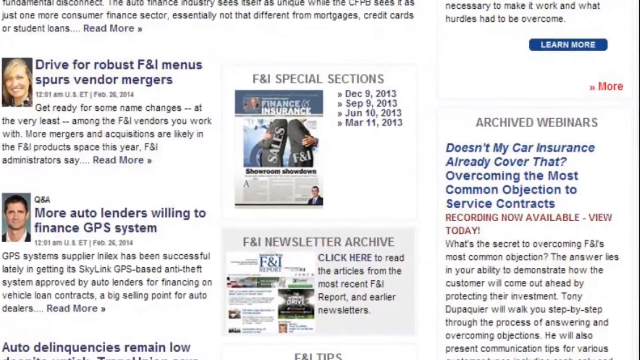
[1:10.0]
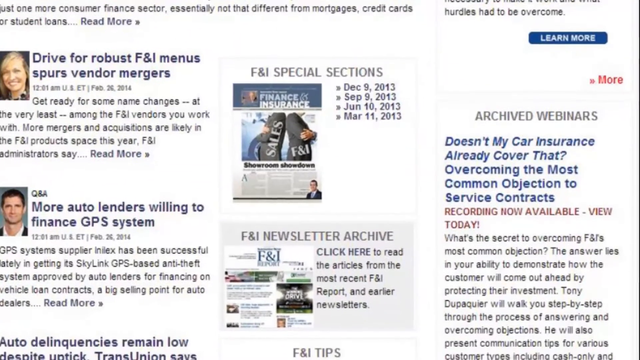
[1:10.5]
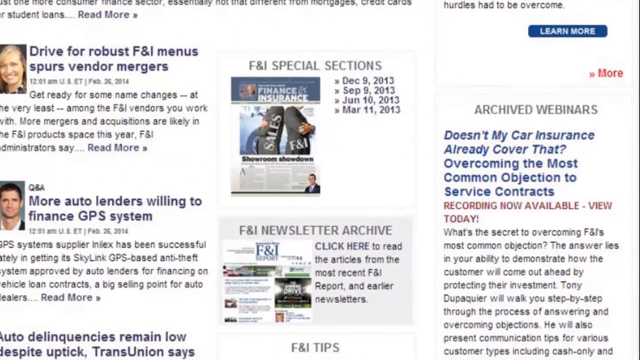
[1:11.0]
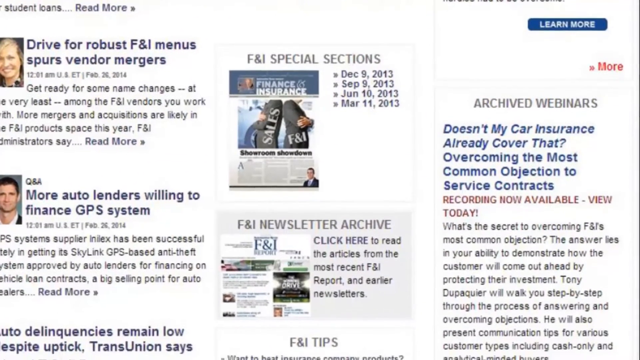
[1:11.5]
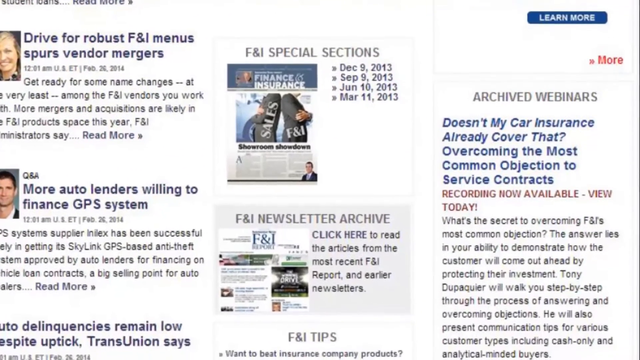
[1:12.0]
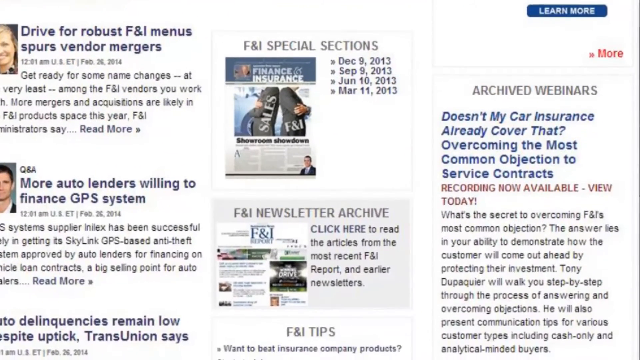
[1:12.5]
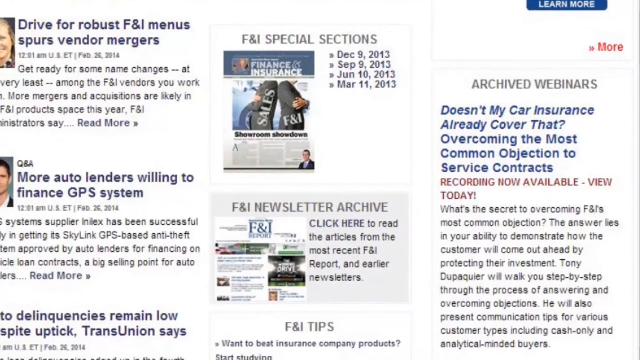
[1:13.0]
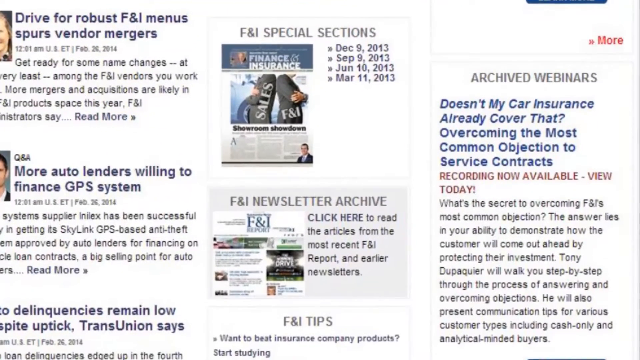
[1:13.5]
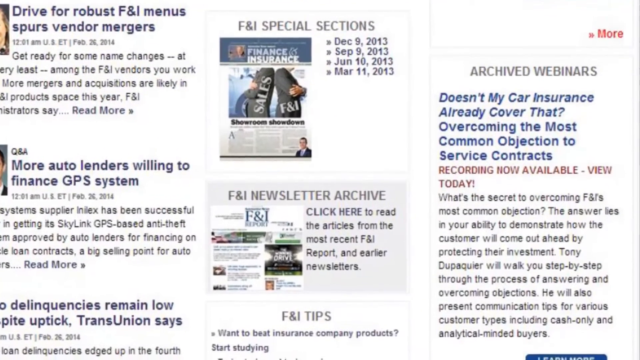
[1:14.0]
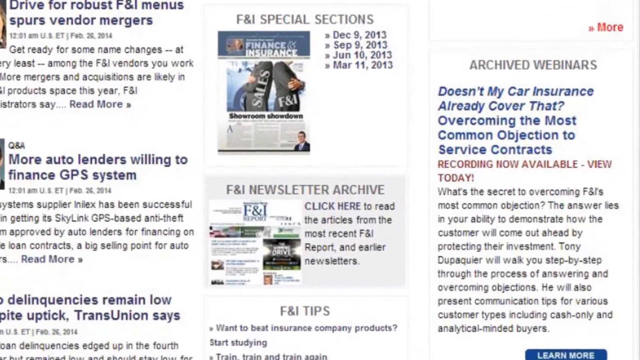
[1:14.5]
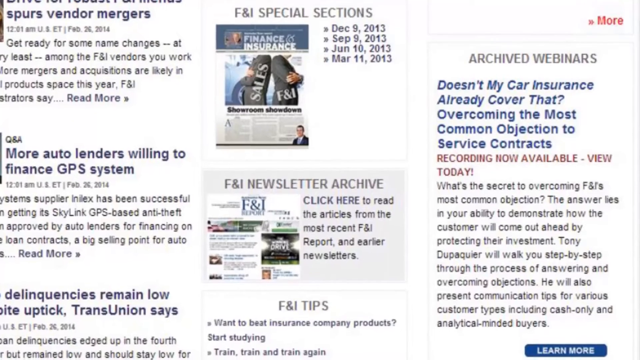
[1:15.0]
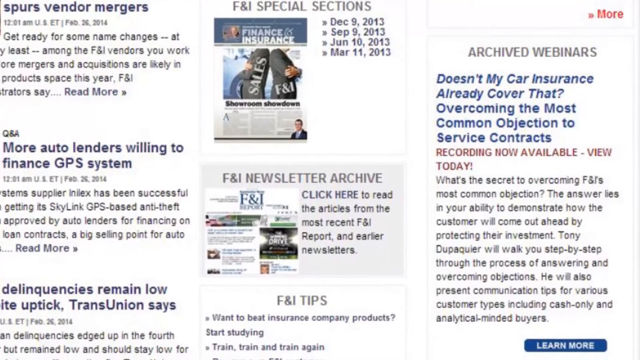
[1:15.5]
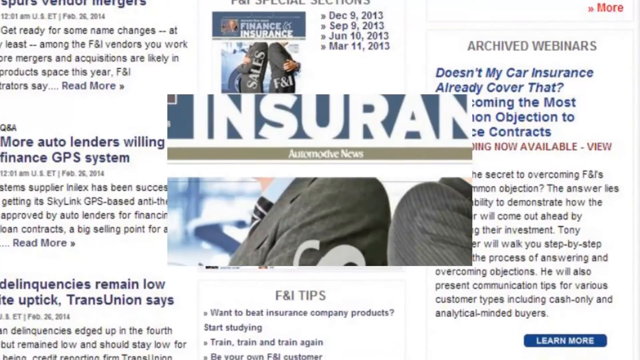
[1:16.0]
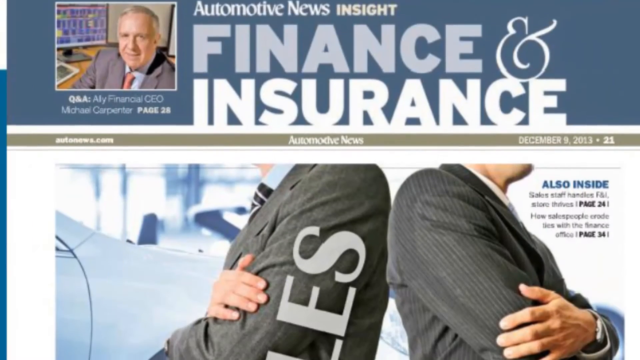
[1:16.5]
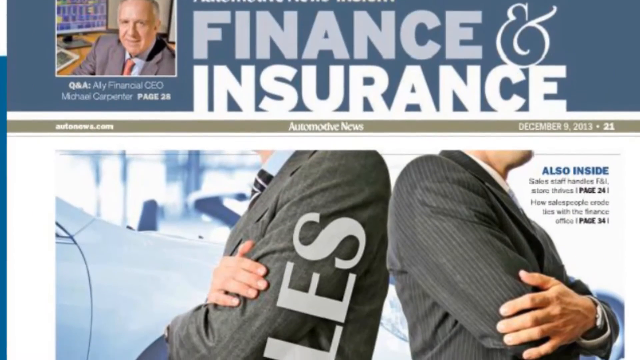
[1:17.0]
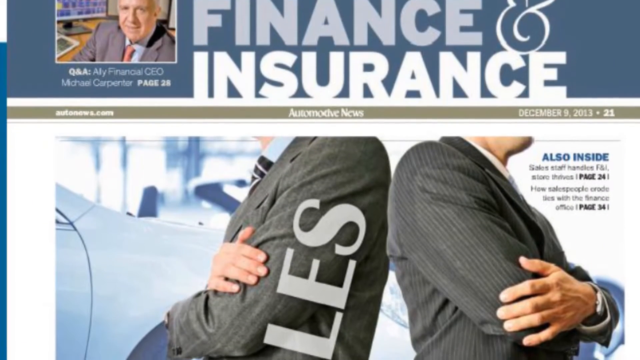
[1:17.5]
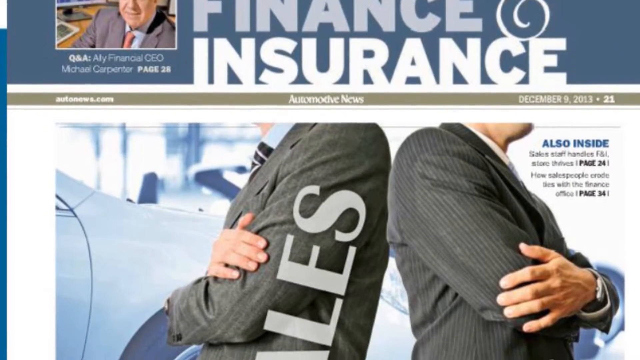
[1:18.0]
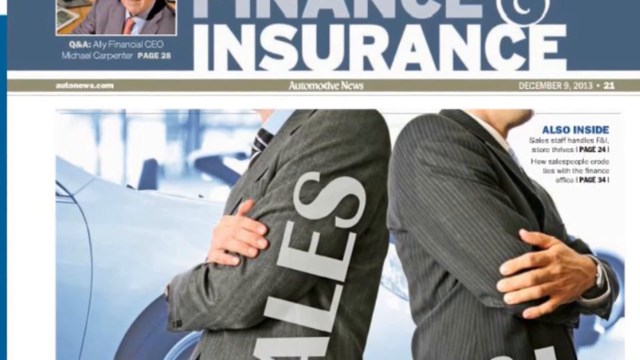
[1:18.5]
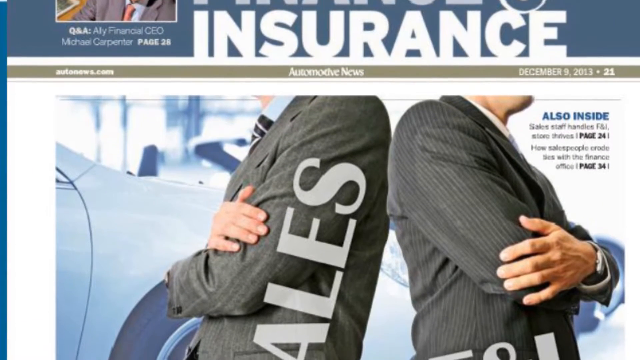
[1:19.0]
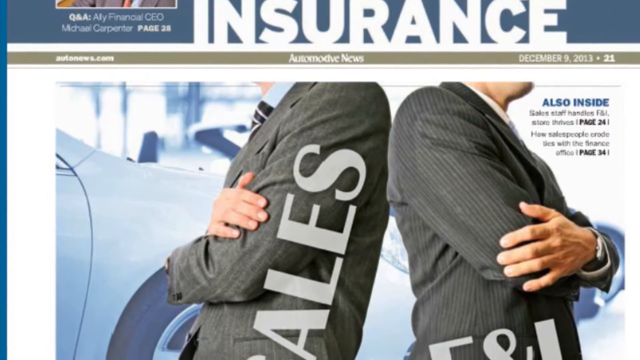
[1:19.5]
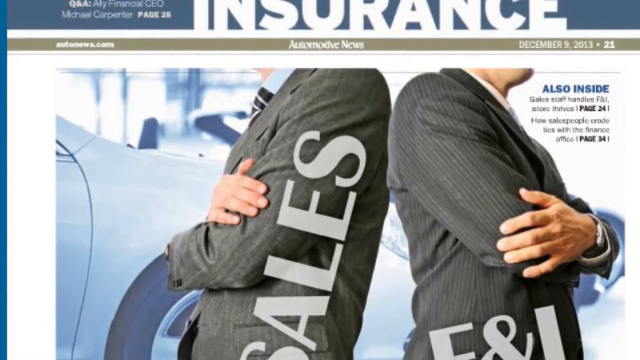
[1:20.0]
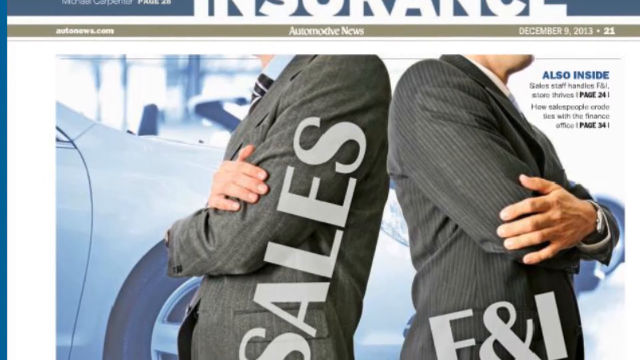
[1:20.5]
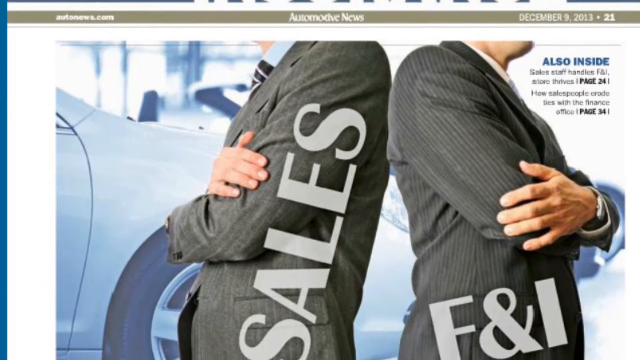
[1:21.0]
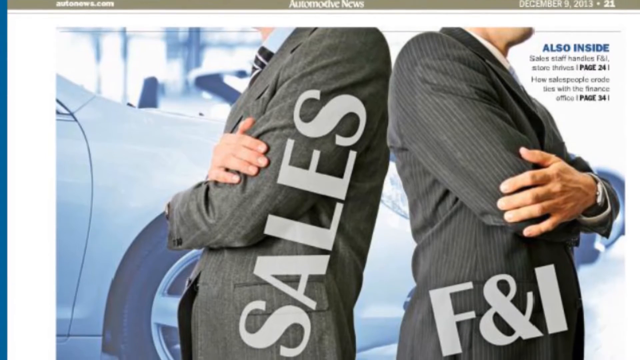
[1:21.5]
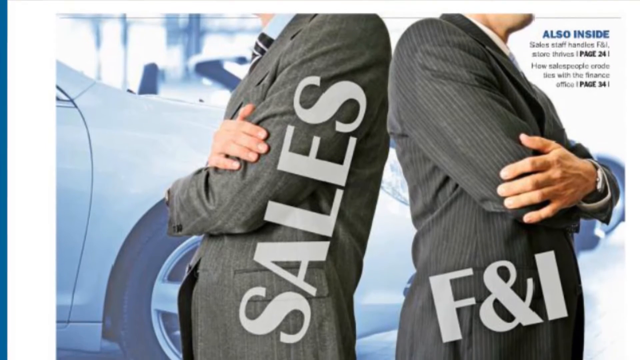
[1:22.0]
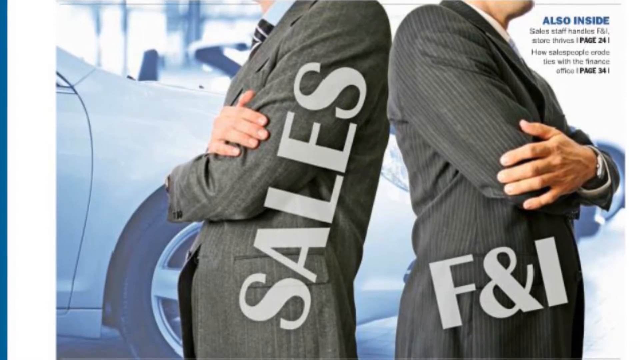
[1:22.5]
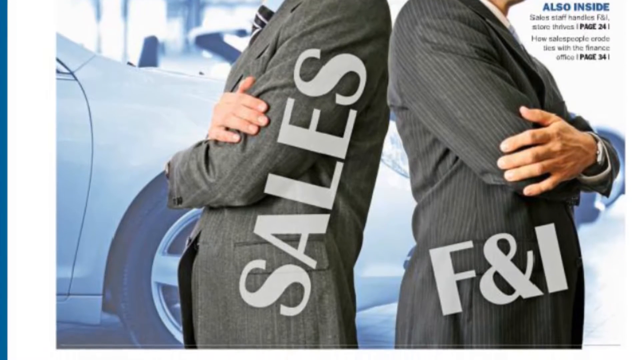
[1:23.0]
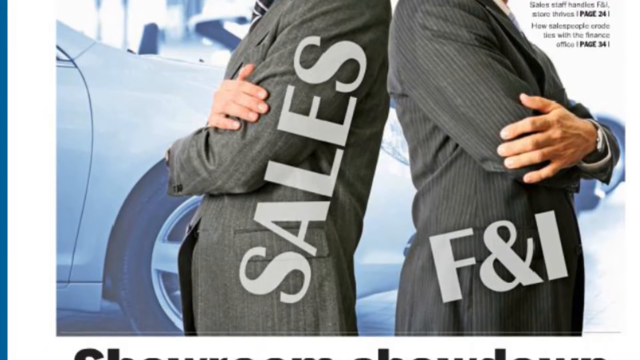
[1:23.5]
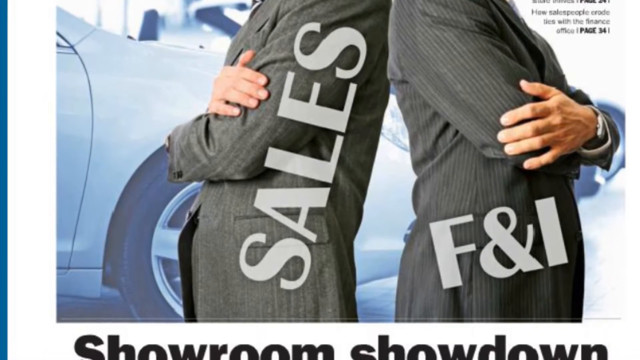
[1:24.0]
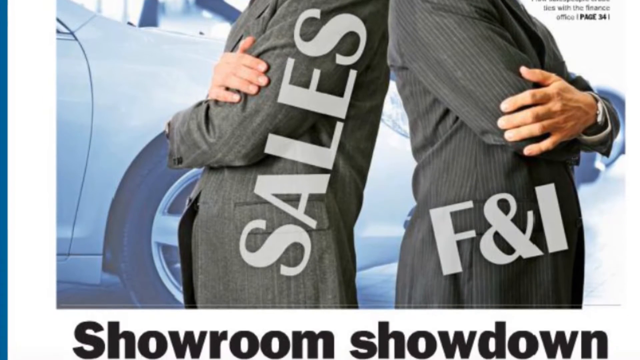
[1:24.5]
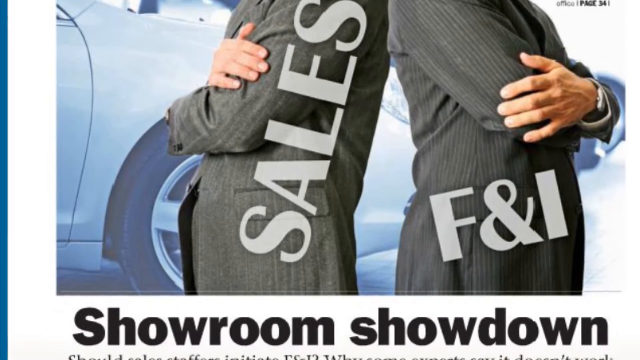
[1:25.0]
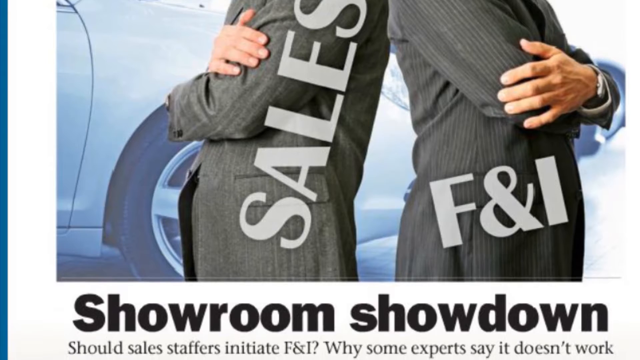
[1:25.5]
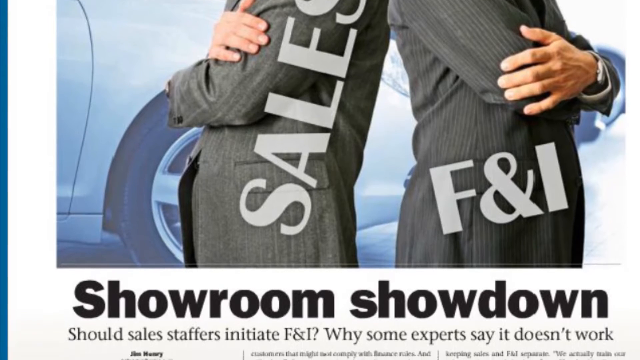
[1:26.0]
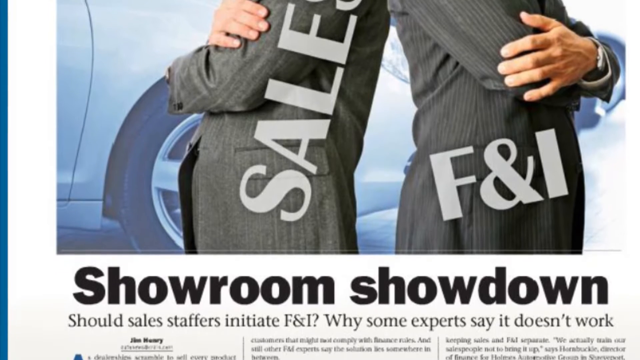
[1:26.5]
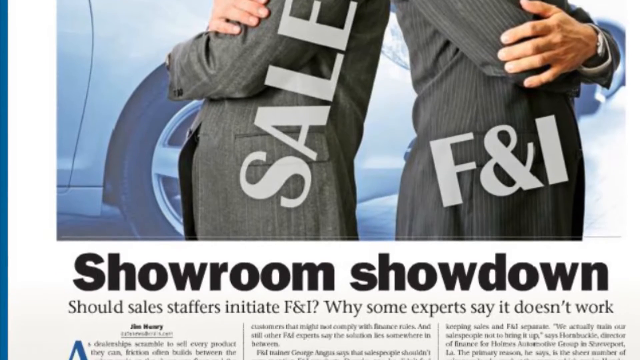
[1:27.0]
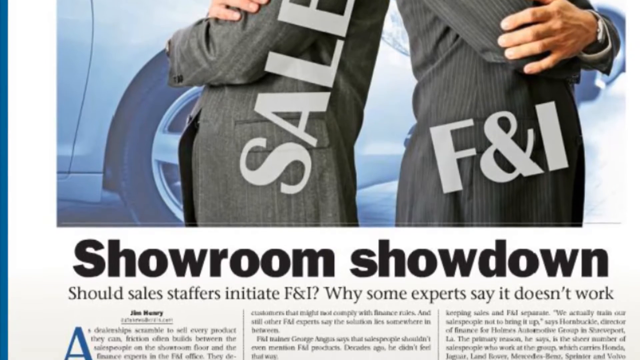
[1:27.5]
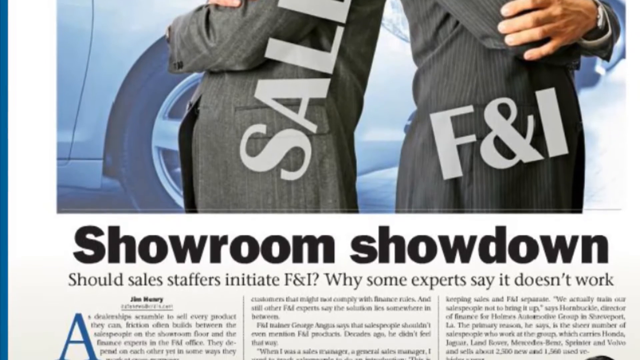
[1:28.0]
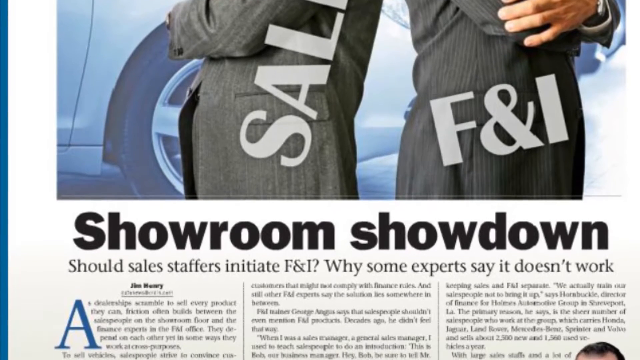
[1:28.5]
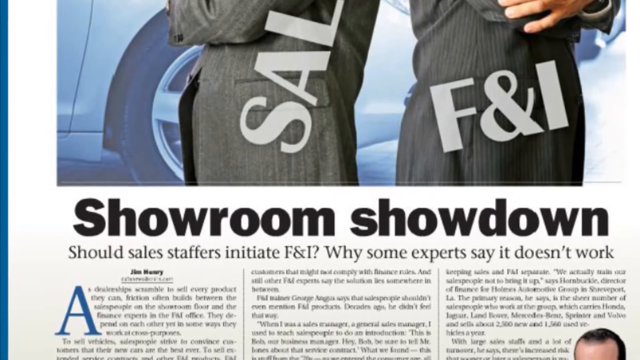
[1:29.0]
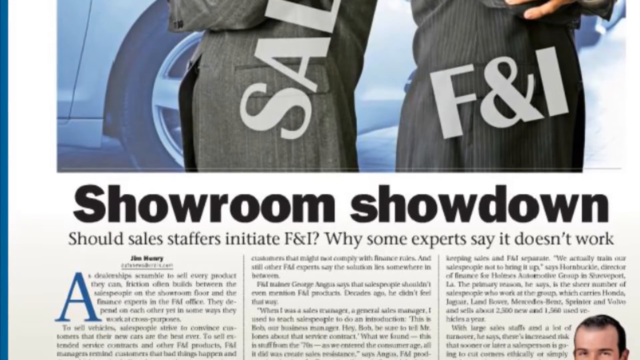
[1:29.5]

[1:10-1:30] The Automotive Access F&I webpage, listing various articles, scrolls up and then changes to another image: two white men standing back to back in charcoal gray suits with their arms crossed across their bodies. The first man has the word "SALES" in gray capital letters overlaid on his body, and the other man has "F&I" in the same light gray text covering his body. The web page then scrolls up to show bold black text reading "showroom showdown," with the subtext "Should sales staffers initiate F&I? Why some experts say it doesn't work."